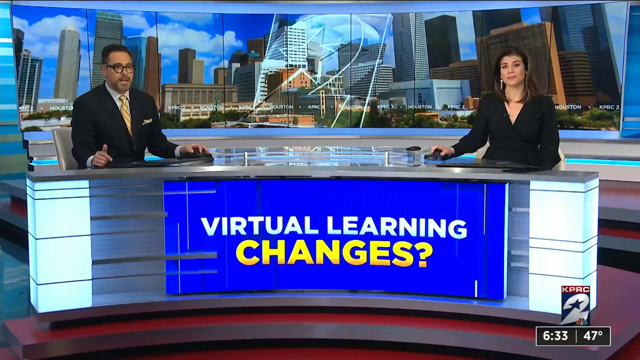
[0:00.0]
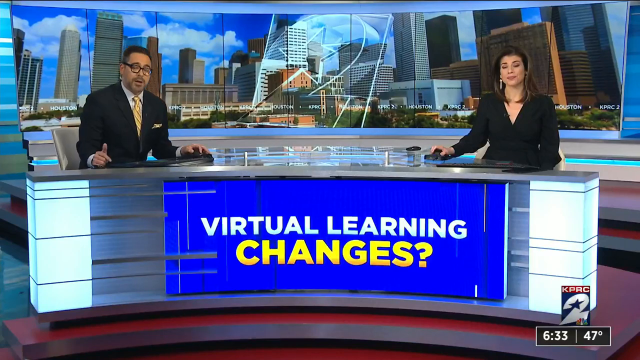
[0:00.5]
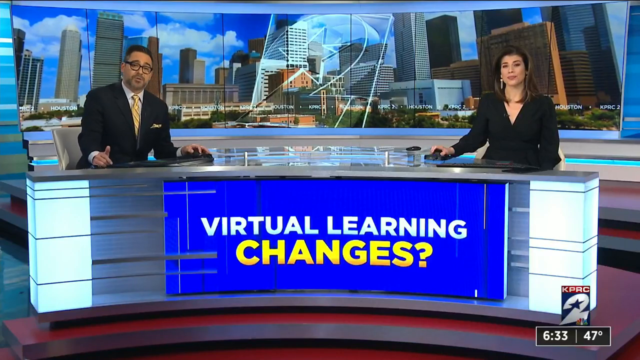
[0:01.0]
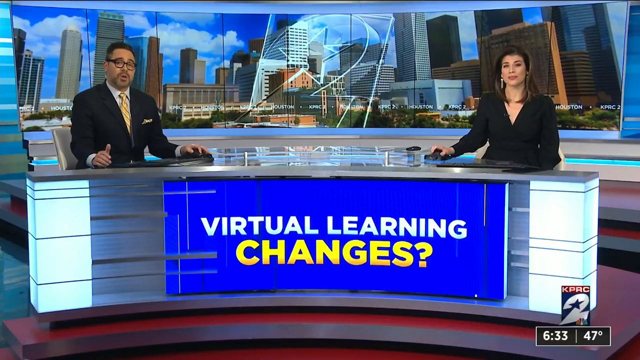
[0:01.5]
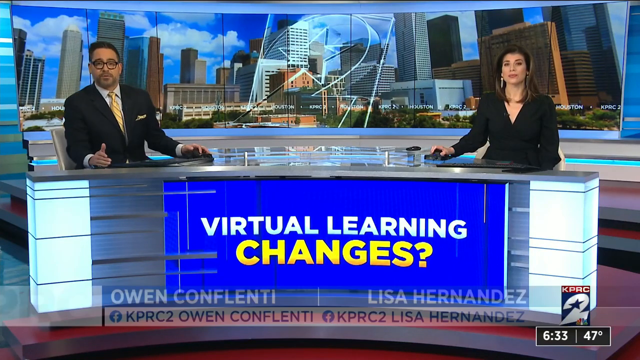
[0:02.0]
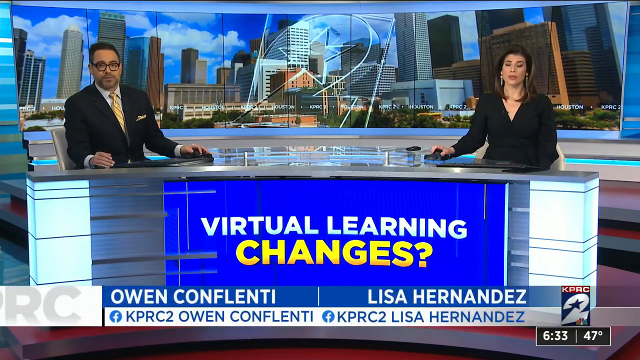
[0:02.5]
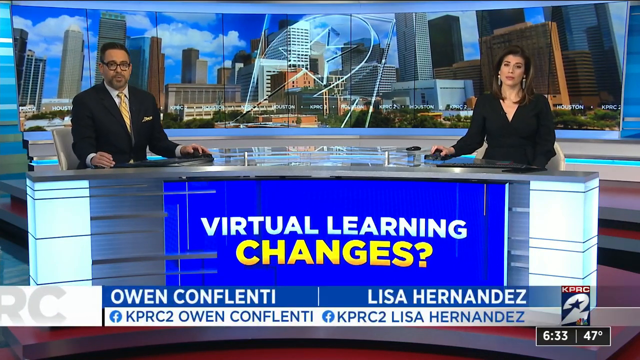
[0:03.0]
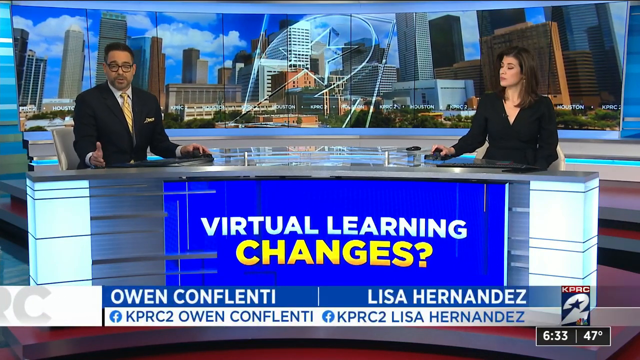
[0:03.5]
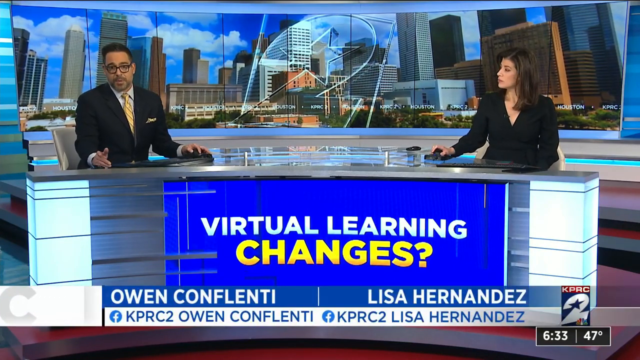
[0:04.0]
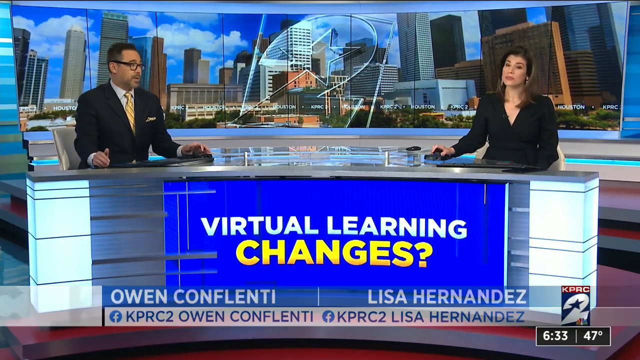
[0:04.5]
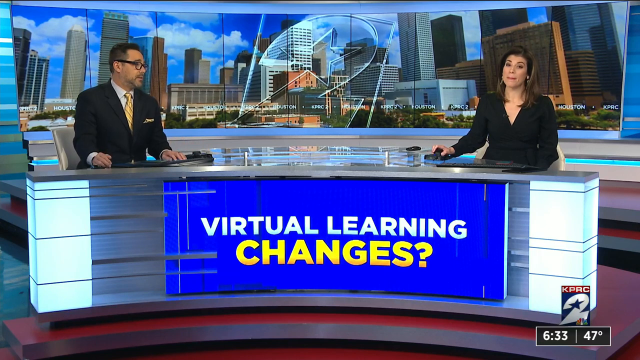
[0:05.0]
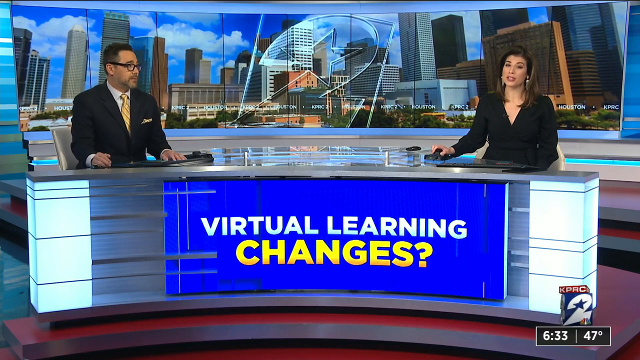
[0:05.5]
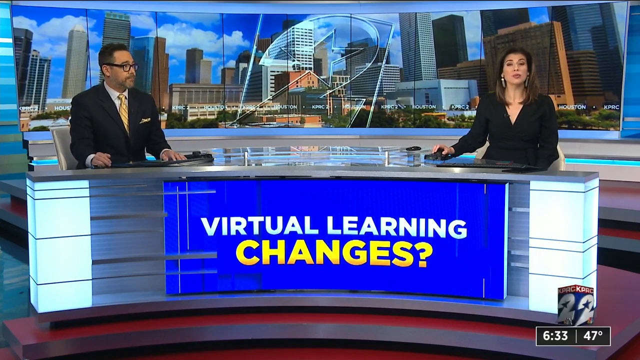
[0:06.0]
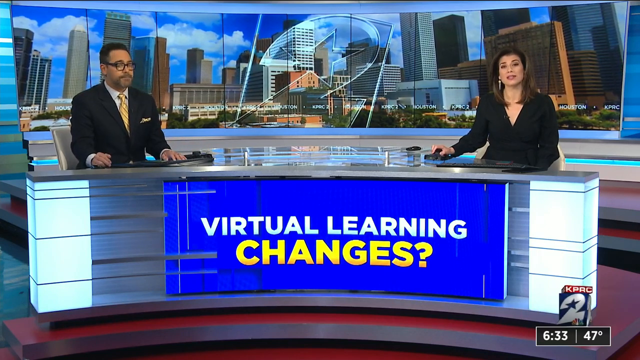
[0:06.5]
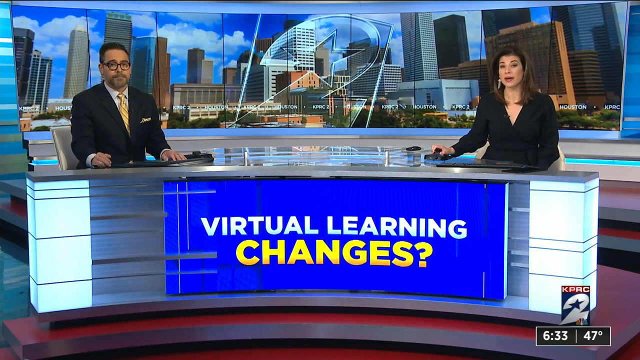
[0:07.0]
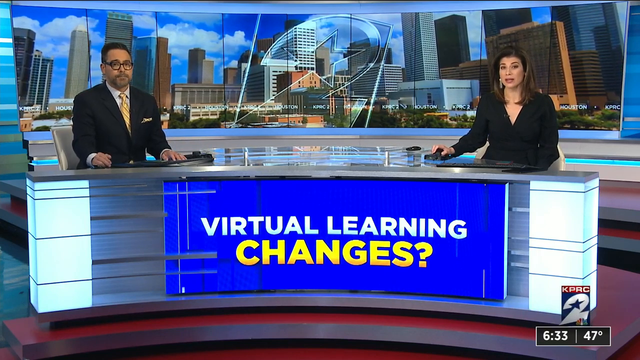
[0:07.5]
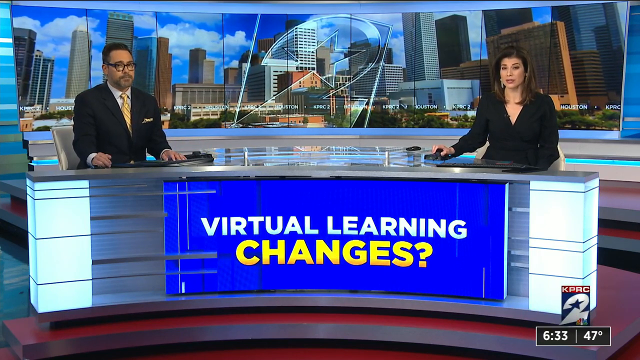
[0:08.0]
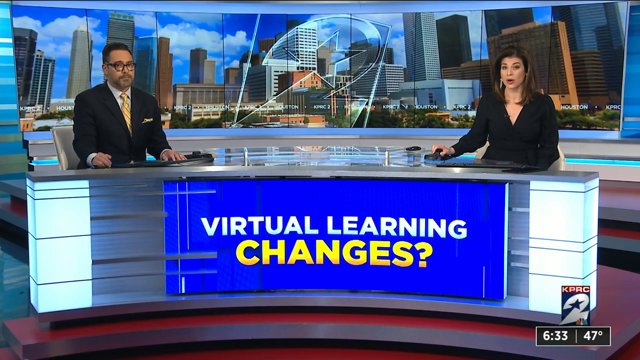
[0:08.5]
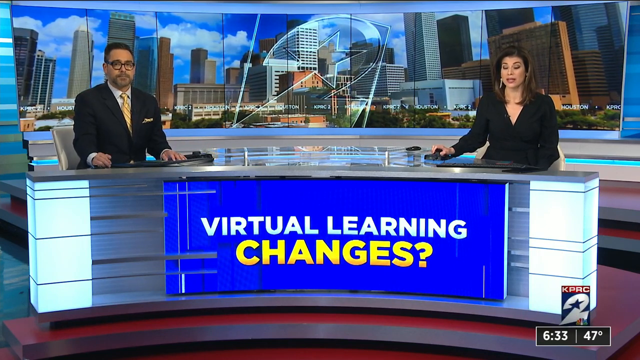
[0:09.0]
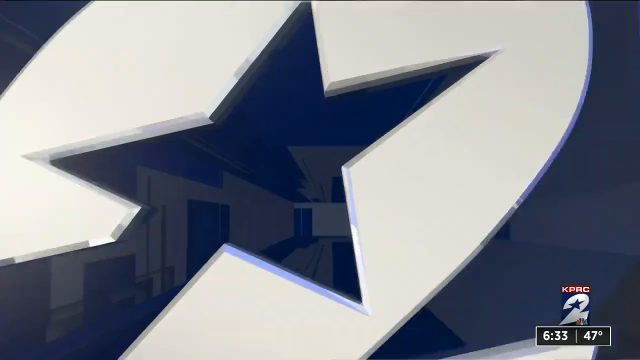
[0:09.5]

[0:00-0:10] A news report shows the two main hosts of the news network, one on the left and one on the right, positioned very far apart from each other. The man on the left wears a yellow tie with brown stripes and a black vest; the woman on the right wears a black vest, apparently with a black undershirt as well. A transition then shows the main logo of the news network, KPRC, followed by a number two, with NBC's logo at the bottom right. A time of 6:33 appears at the bottom right, and the screen apparently indicates that it is 47 degrees where they are.